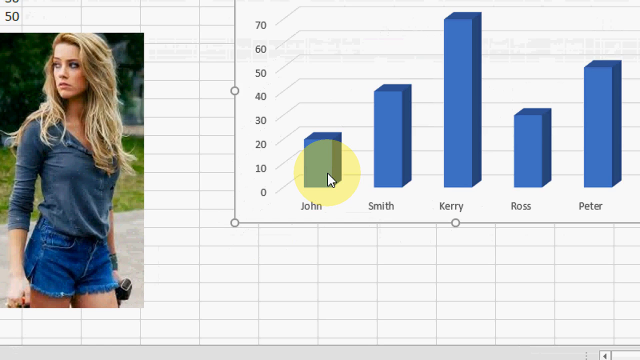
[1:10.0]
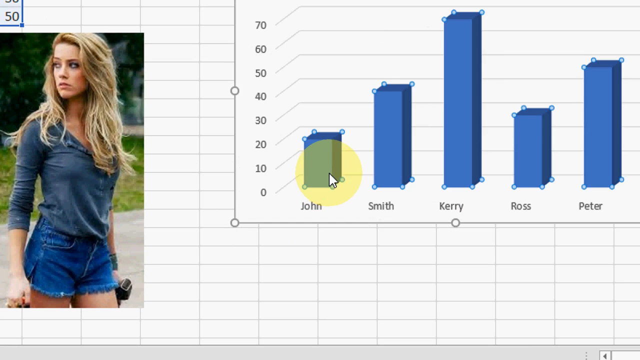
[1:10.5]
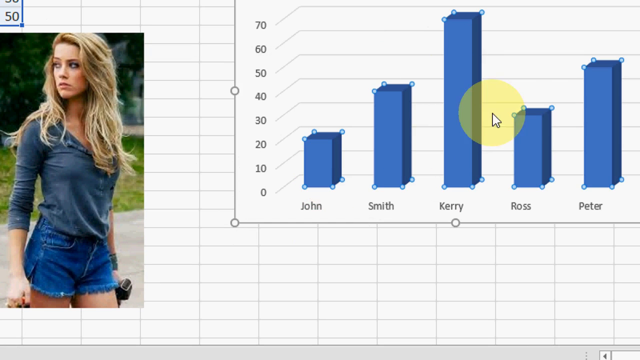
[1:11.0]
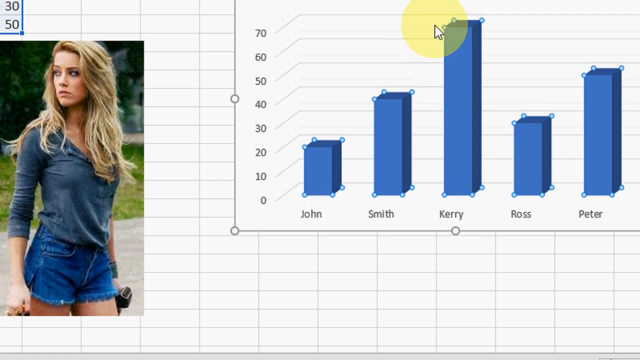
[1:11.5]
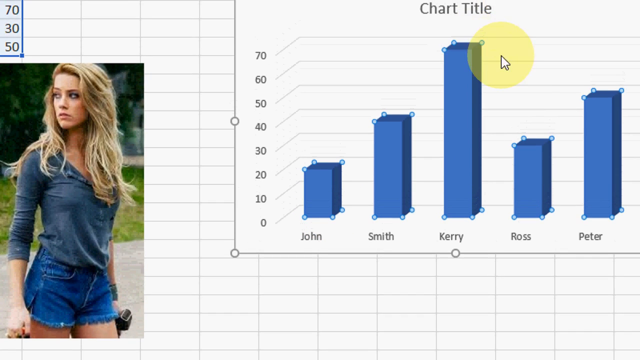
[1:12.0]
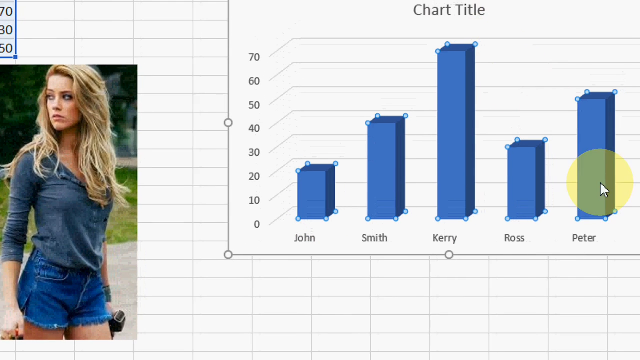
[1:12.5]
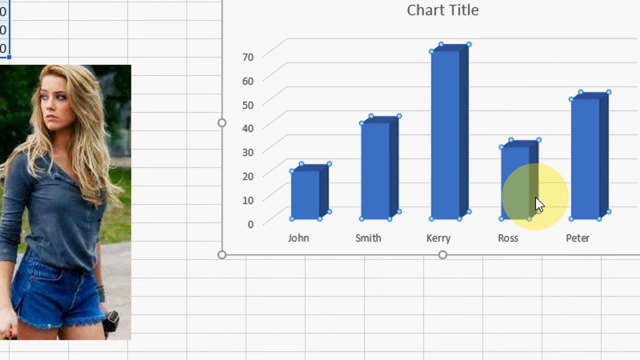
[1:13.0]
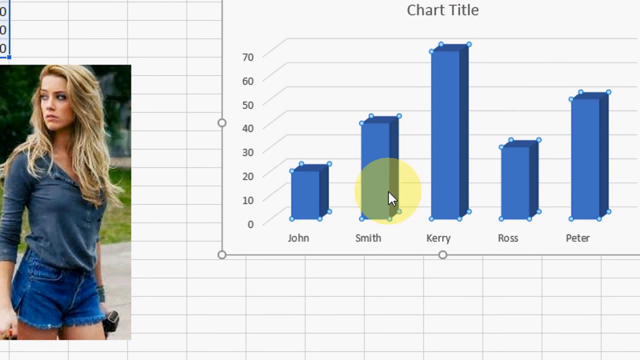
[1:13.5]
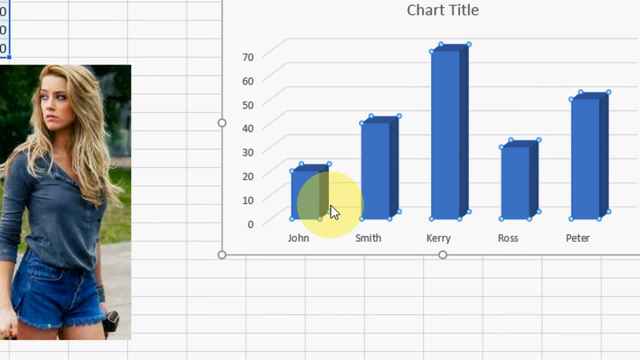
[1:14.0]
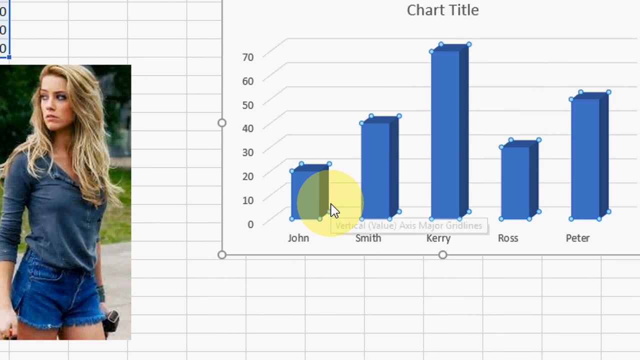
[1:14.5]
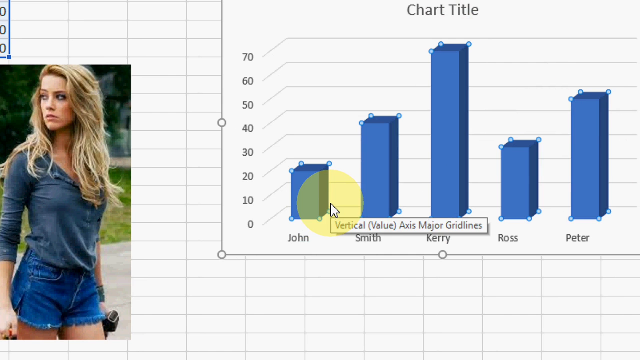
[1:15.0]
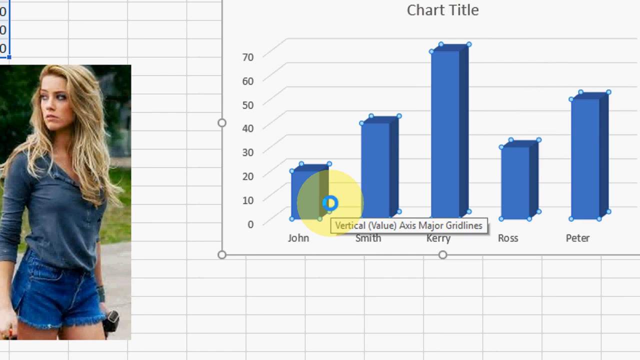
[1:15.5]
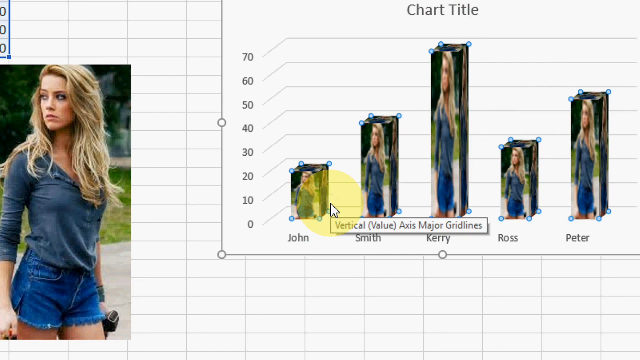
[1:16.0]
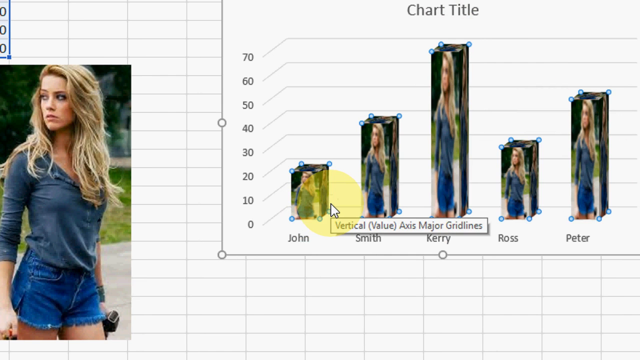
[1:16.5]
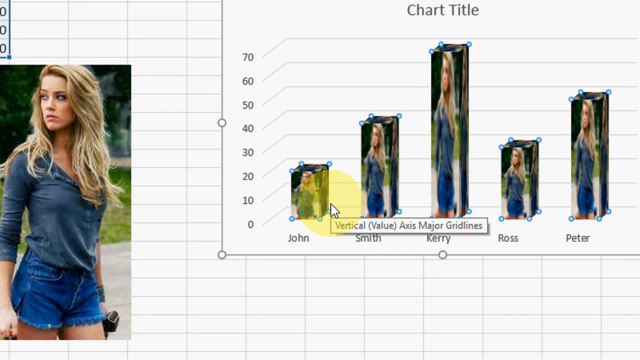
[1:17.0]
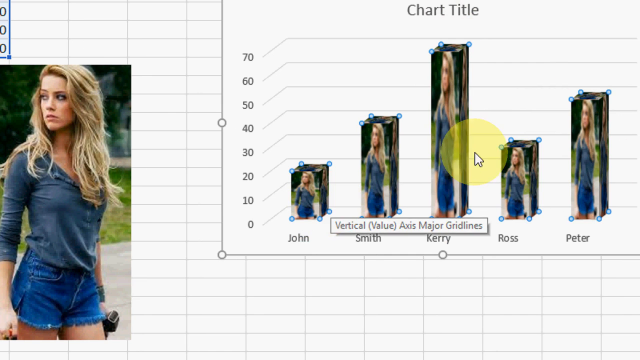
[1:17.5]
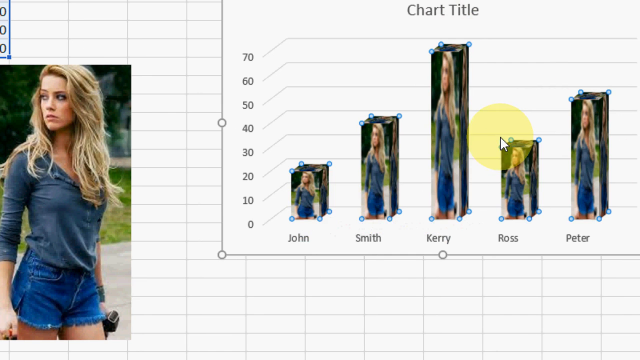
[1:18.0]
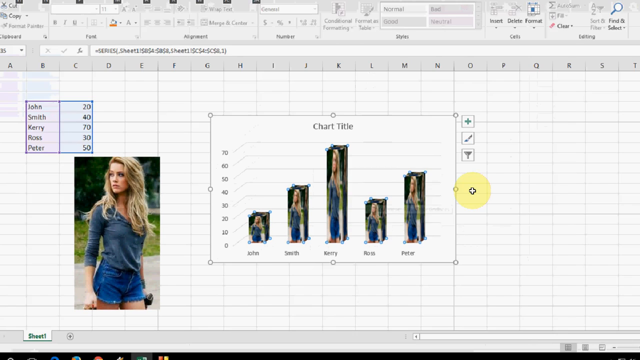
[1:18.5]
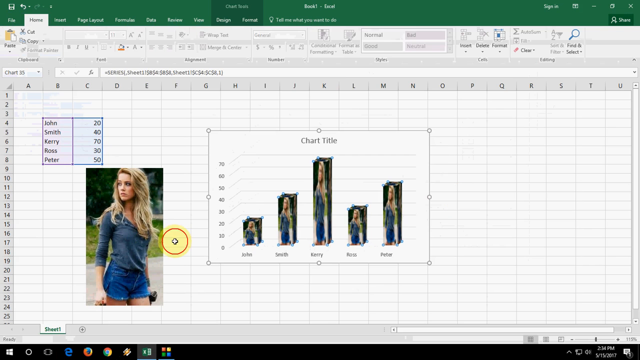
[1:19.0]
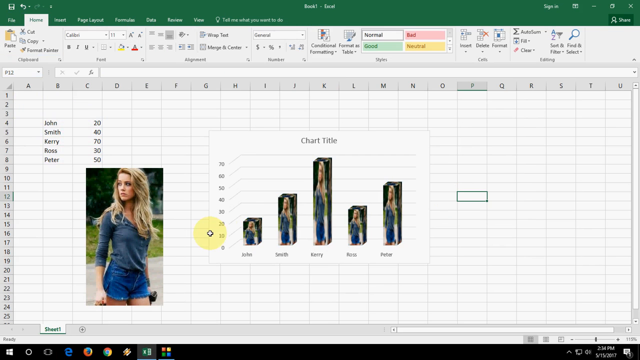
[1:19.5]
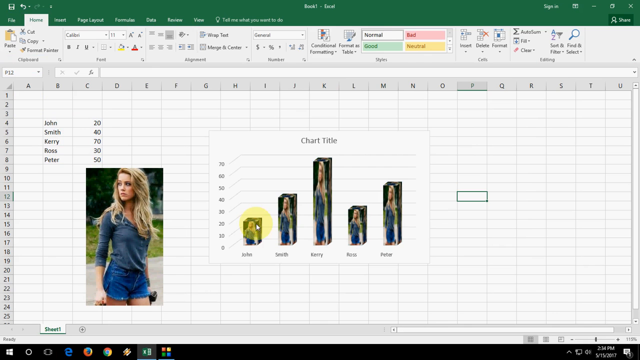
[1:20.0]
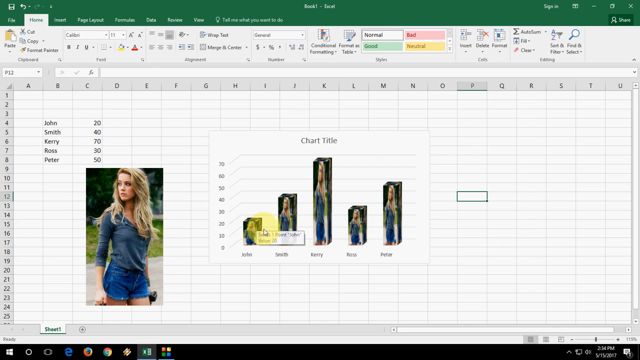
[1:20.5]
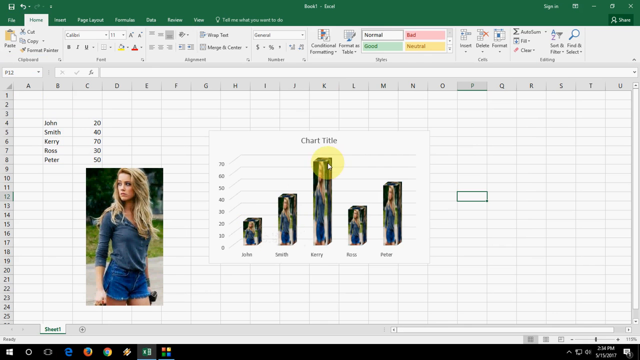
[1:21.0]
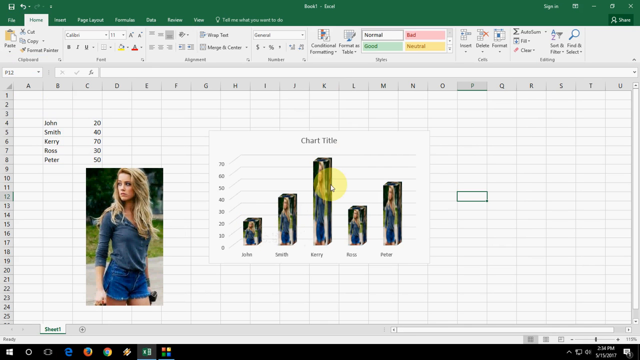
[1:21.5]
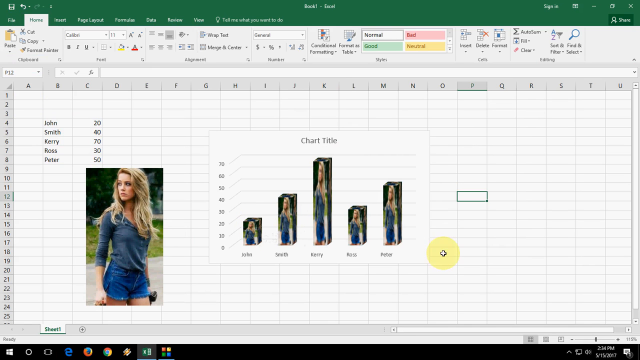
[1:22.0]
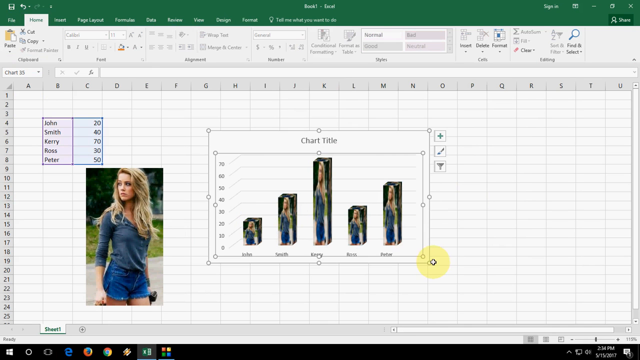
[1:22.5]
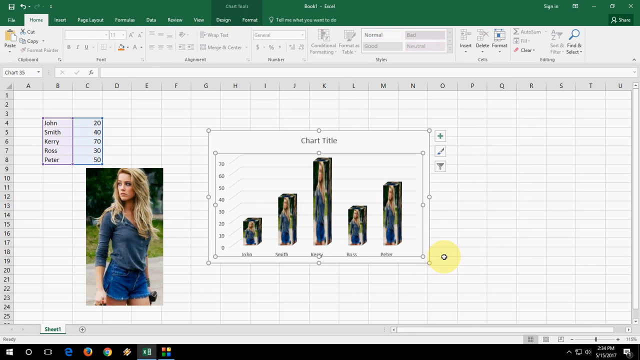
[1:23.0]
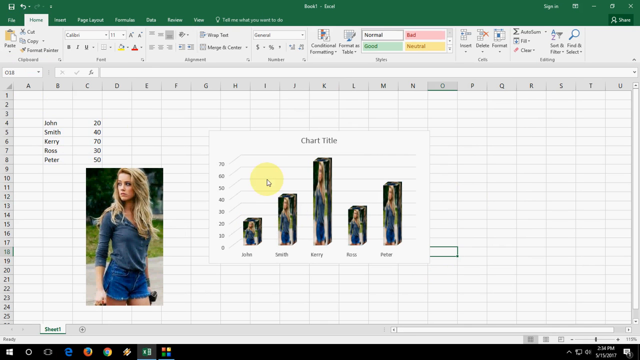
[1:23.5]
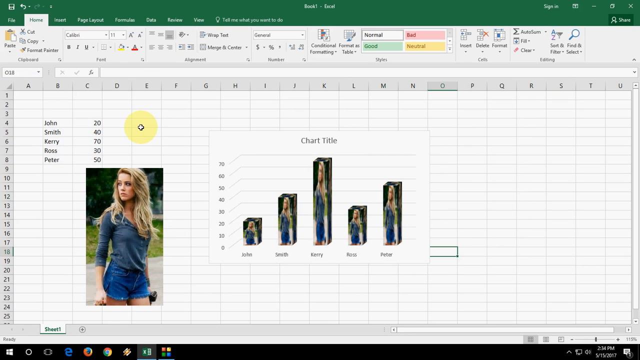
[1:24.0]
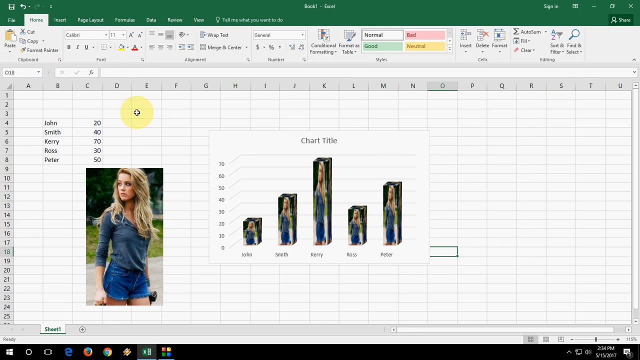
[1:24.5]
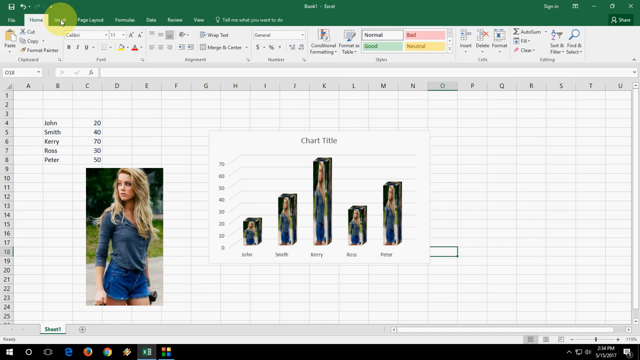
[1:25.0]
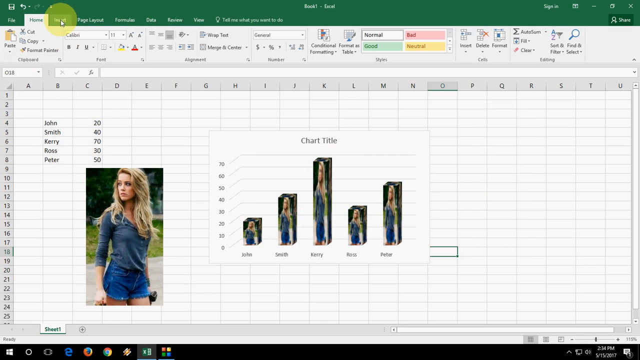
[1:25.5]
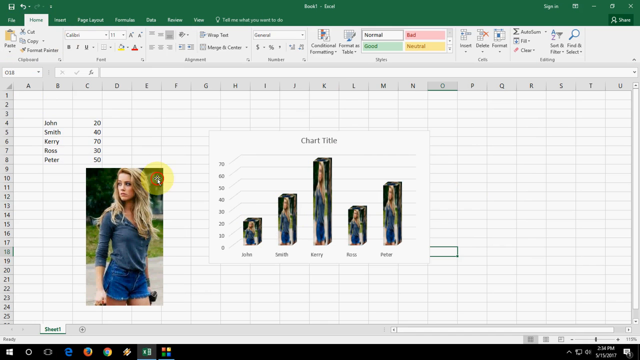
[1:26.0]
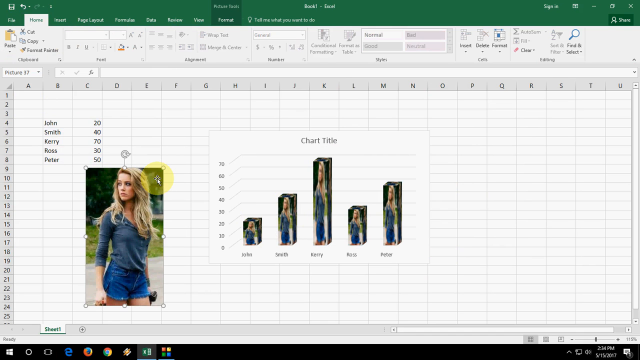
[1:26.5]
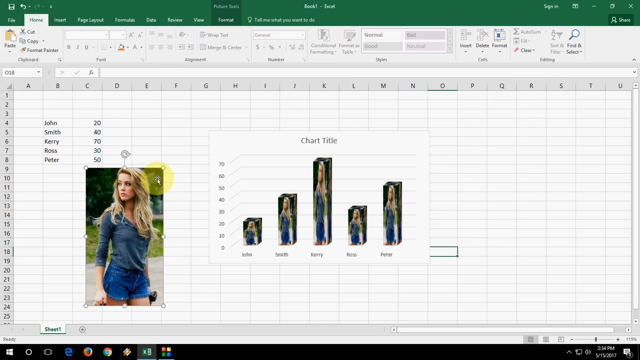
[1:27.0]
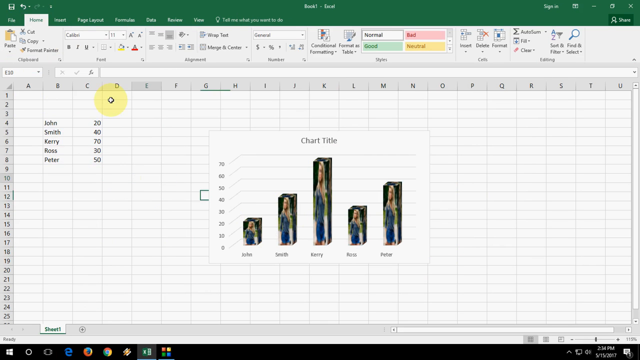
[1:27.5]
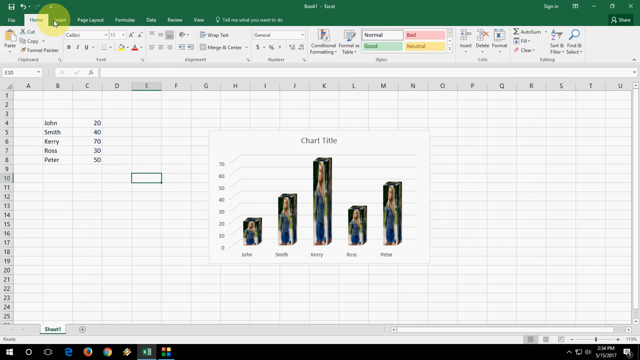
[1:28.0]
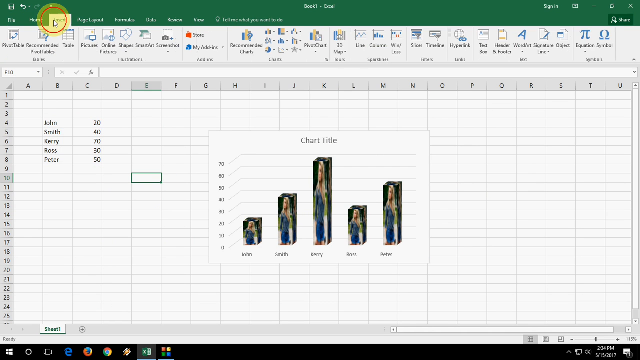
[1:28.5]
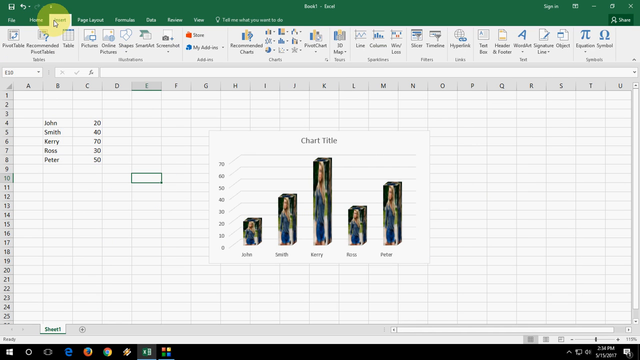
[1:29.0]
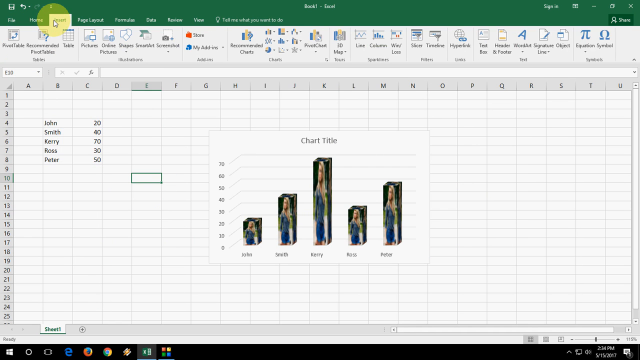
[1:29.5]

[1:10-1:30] A Windows Excel spreadsheet is on a Windows PC monitor, with a pop-up box called the chart title in the middle containing names. A grid on its left has the numbers 0, 10, 20, 30, 40, 50, 60 and 70 from bottom to top. Boxes or columns shaped like squares represent the people John, Smith, Kerry, Ross and Peter, and each one carries the same photograph of the same woman. The blue columns are different heights. A cursor with a yellow halo moves around the boxes, changing their shapes, and also works on the toolbar at the top of the spreadsheet, seemingly resizing the chart title box.